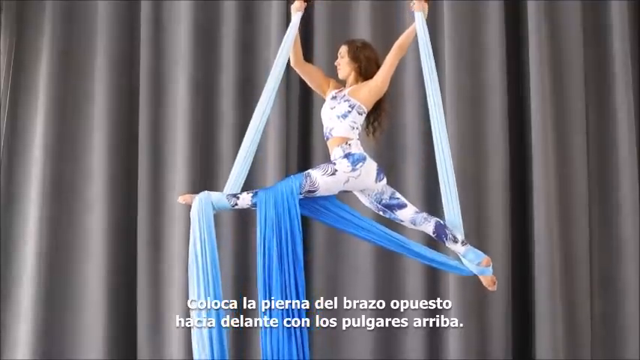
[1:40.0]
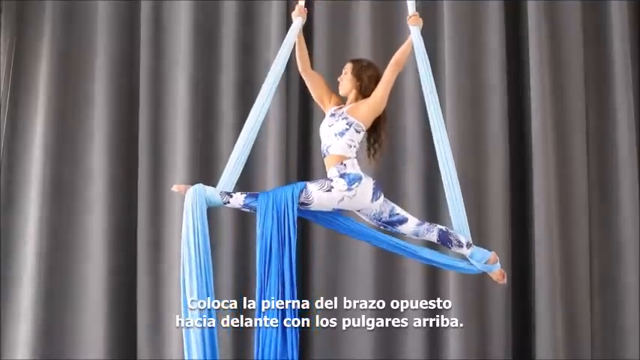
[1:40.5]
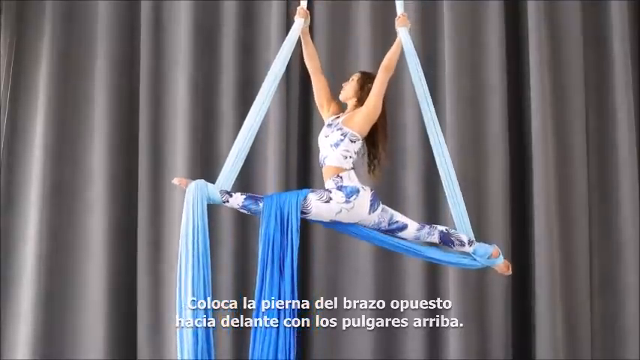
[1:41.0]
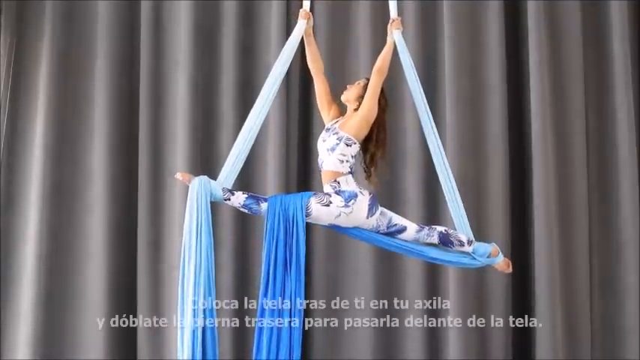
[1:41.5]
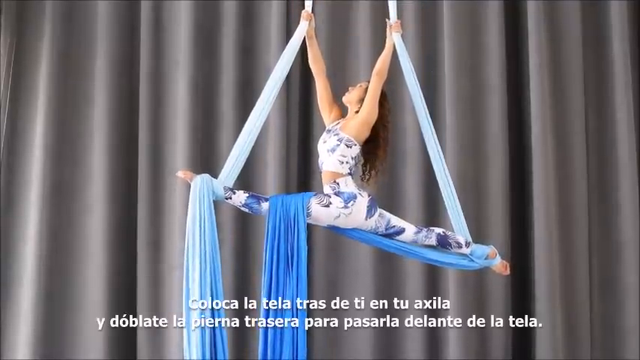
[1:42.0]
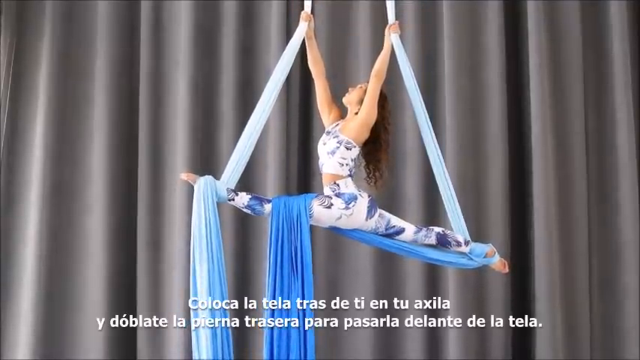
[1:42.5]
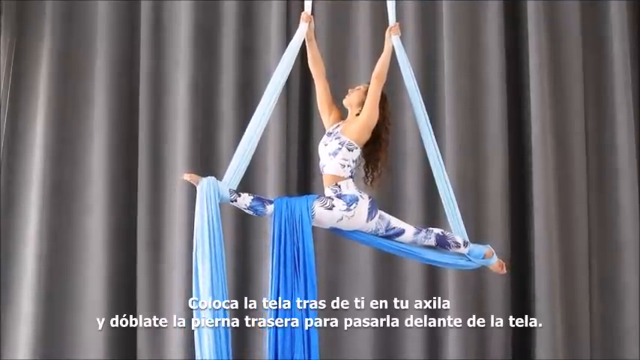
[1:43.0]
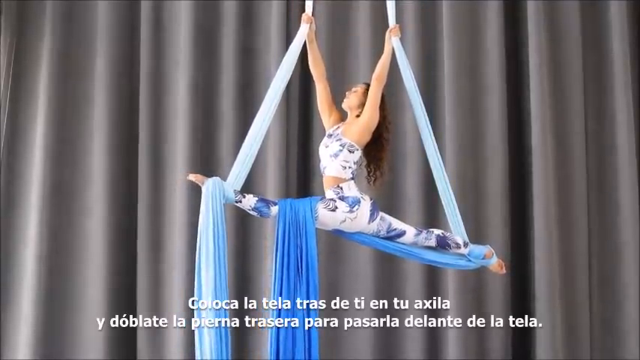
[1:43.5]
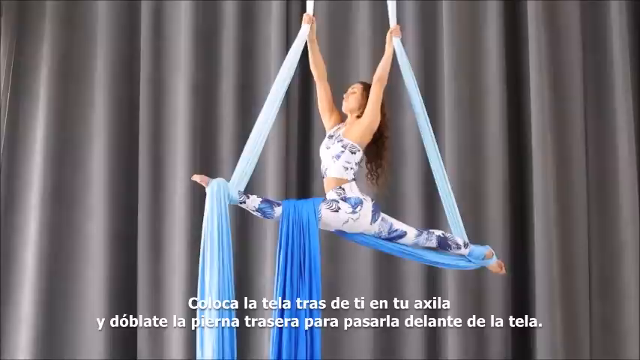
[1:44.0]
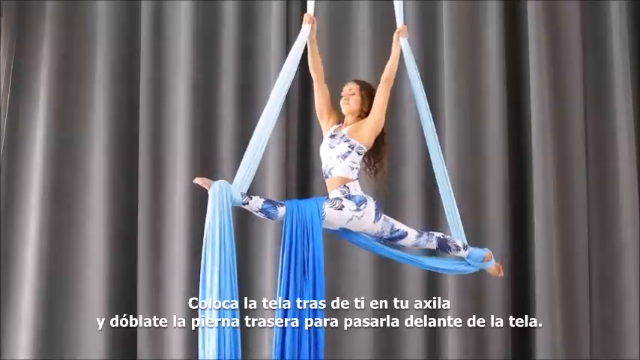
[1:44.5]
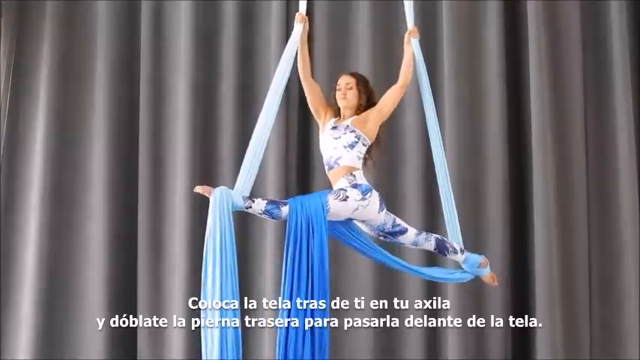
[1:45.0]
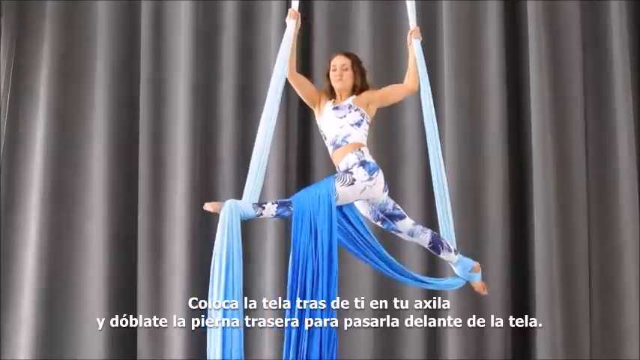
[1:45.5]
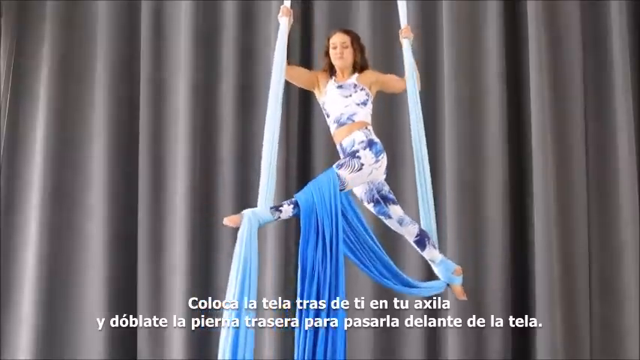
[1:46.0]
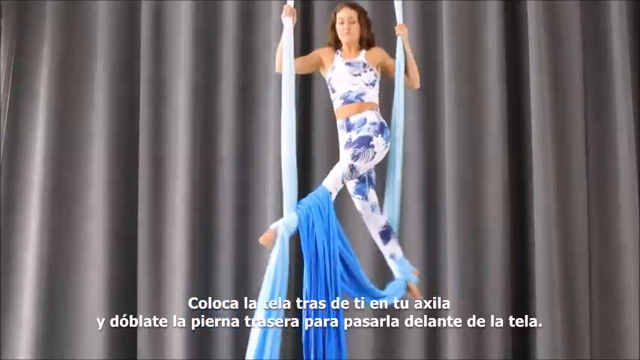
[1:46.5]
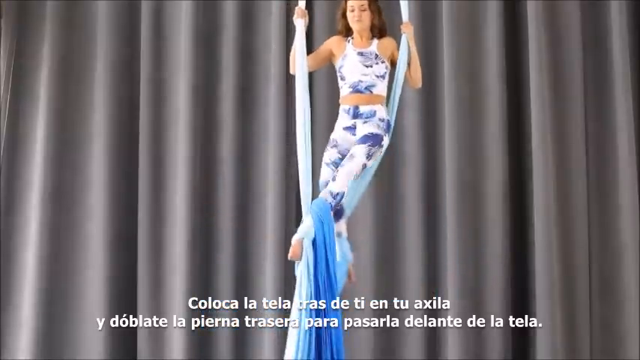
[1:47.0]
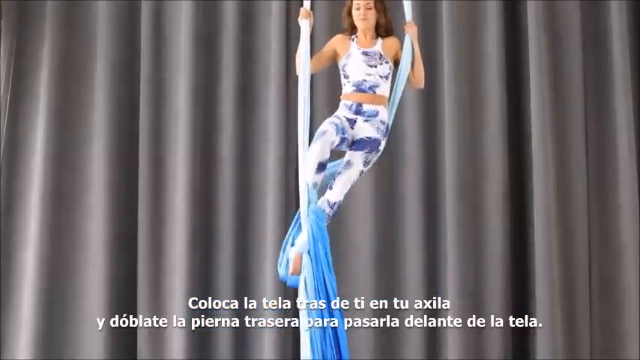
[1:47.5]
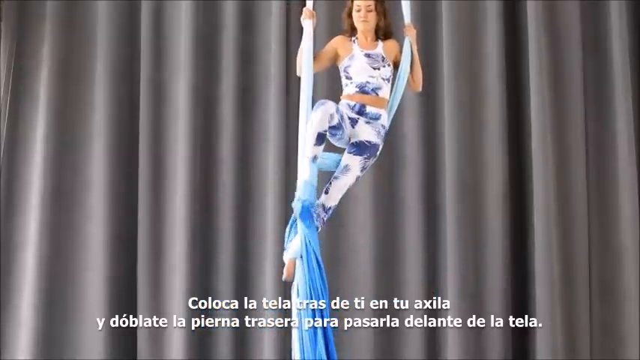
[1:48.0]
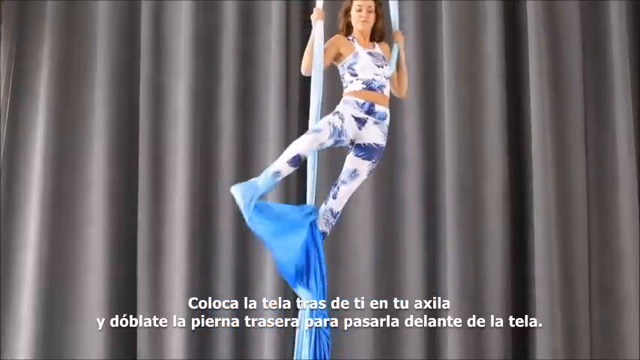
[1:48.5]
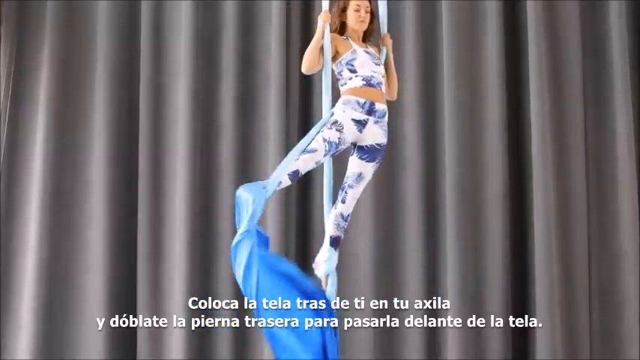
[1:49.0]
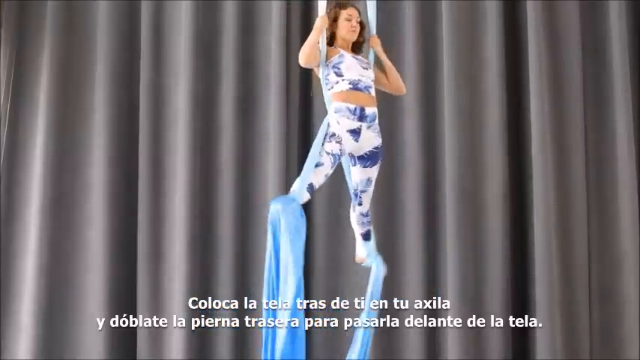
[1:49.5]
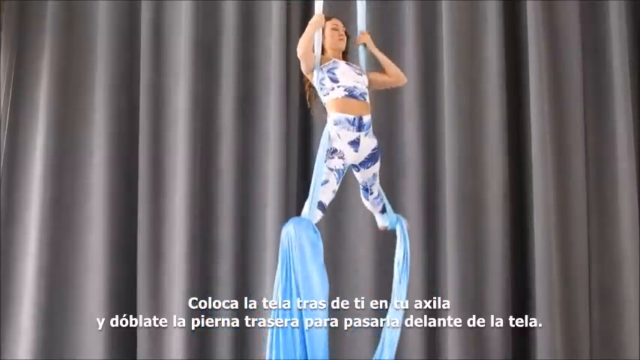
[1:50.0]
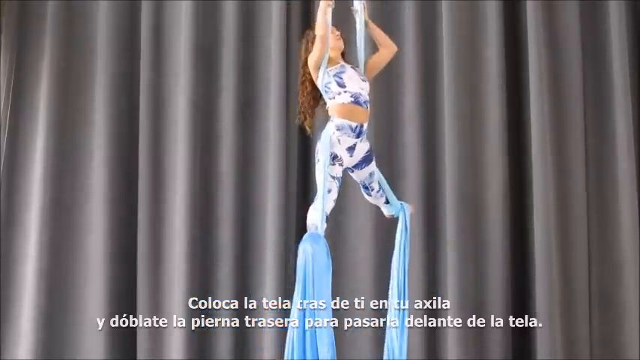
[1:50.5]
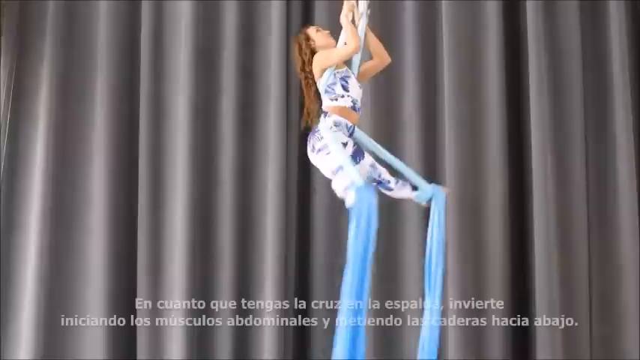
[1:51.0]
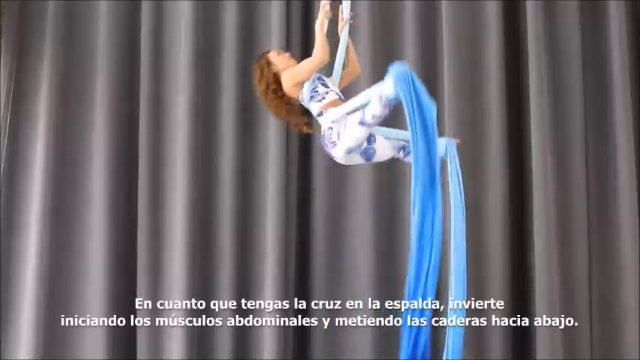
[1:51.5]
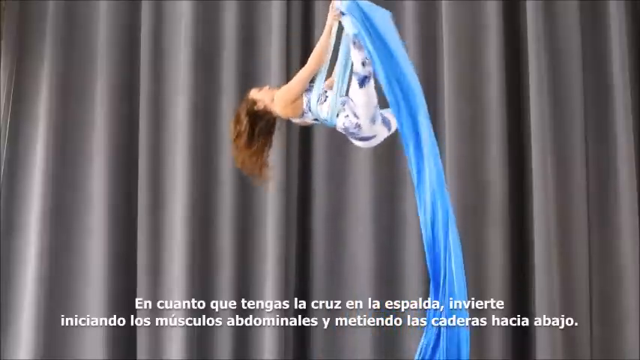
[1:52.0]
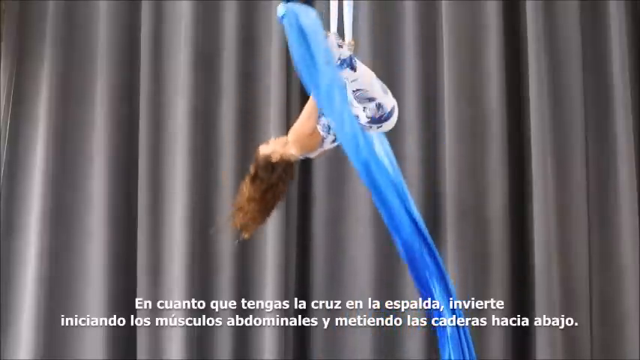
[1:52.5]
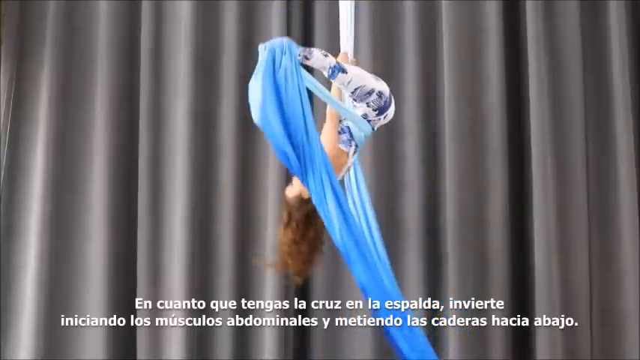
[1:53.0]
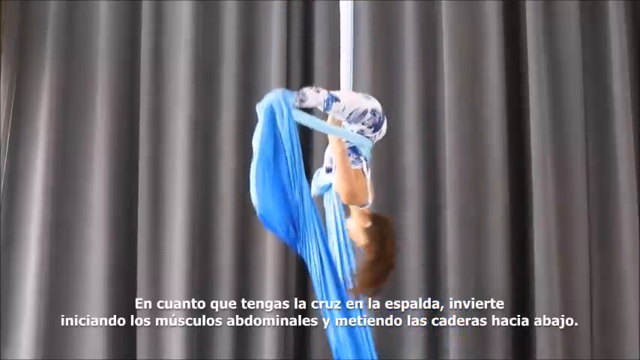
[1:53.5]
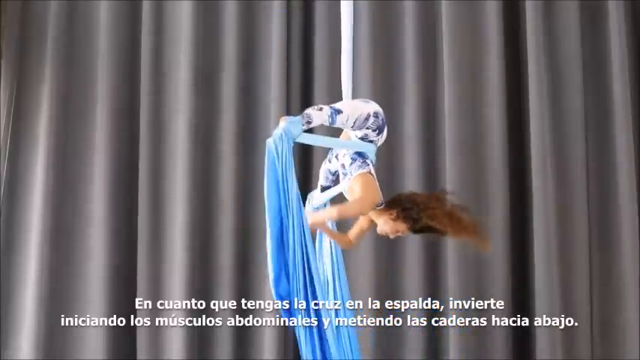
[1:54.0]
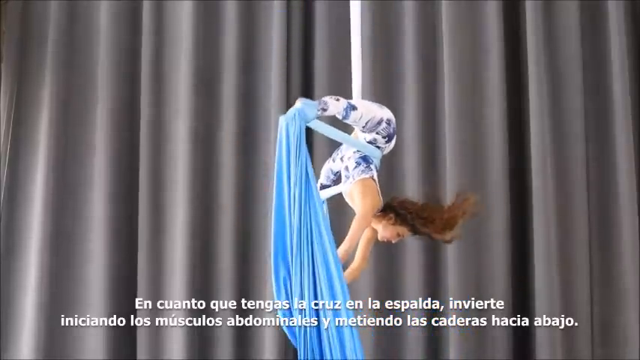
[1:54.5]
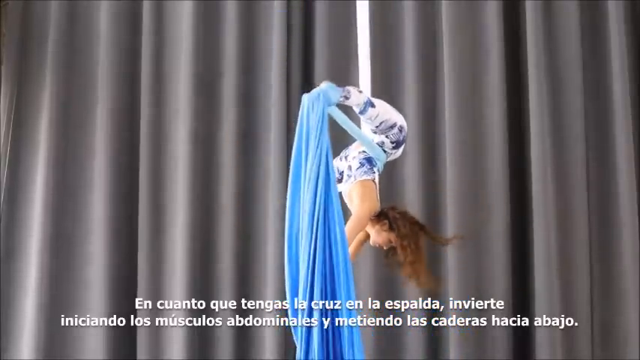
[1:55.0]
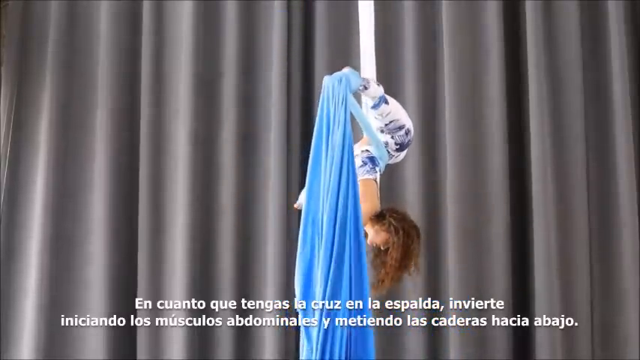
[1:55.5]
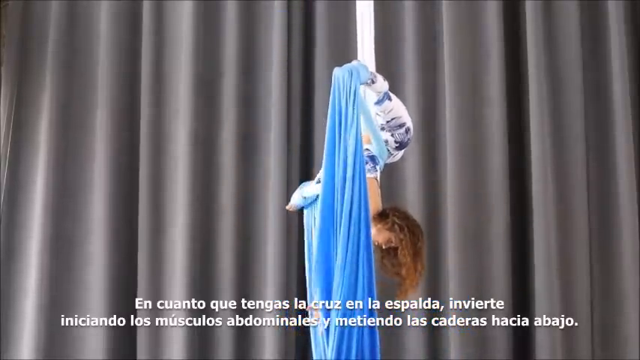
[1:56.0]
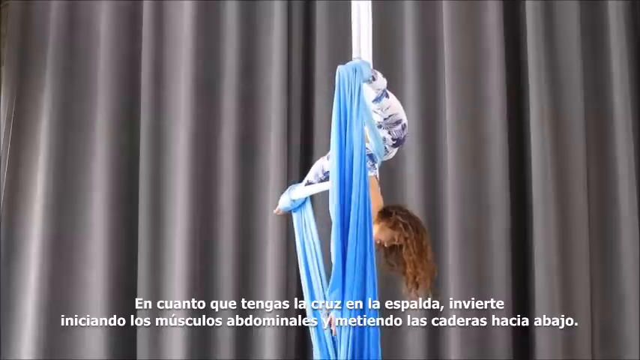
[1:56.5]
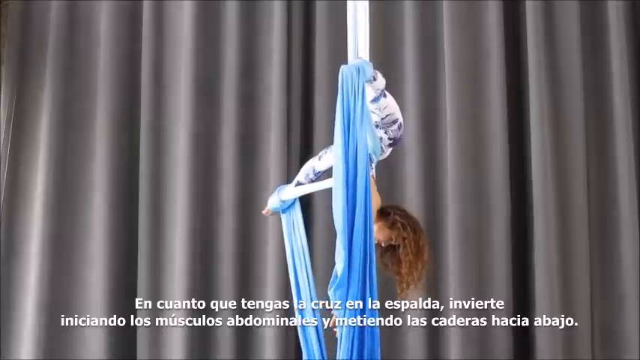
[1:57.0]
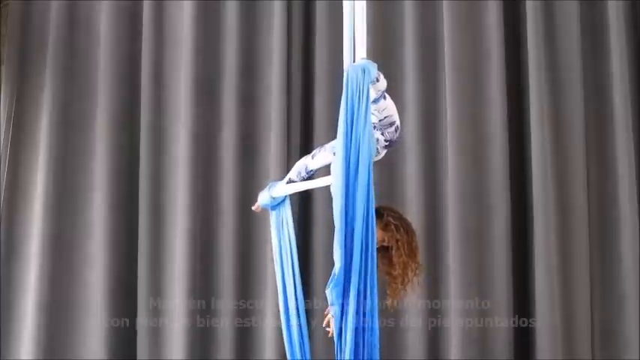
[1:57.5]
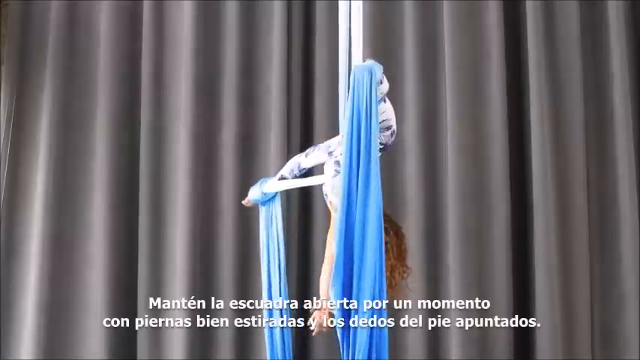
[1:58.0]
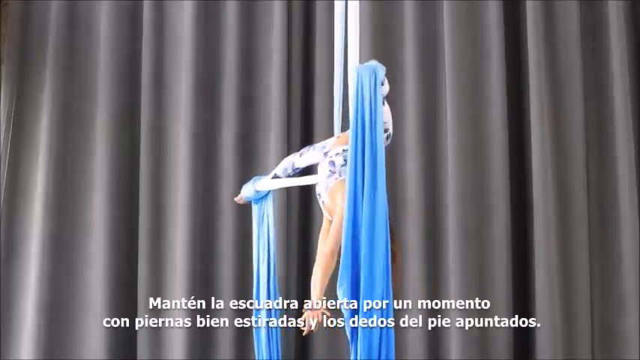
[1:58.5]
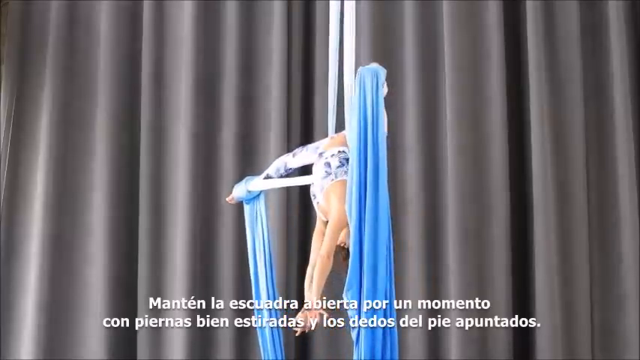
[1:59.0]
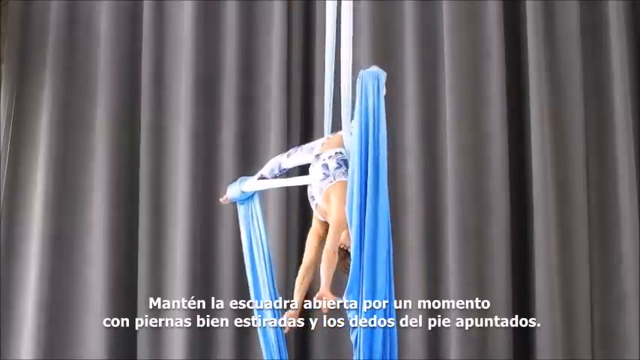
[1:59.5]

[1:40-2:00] A woman performs an aerial routine with her head facing toward the left of the frame. She wears what are almost like white yoga pants with various pictures or emblems on them, mostly a kind of purplish gray color, and what looks like a sports bra on top, with a little of her belly showing. She takes a very deep bend. She does a total flip, the material slips around her legs, and she continues the performance completely upside down, then pulls herself back up.